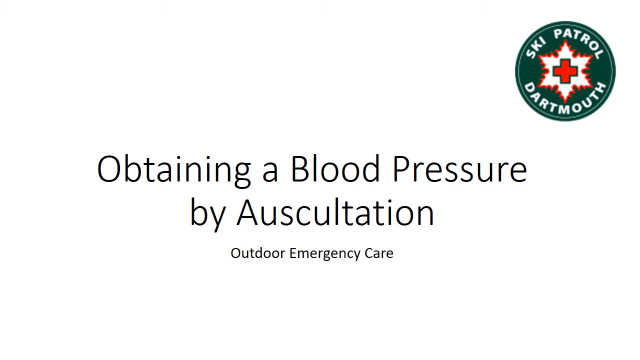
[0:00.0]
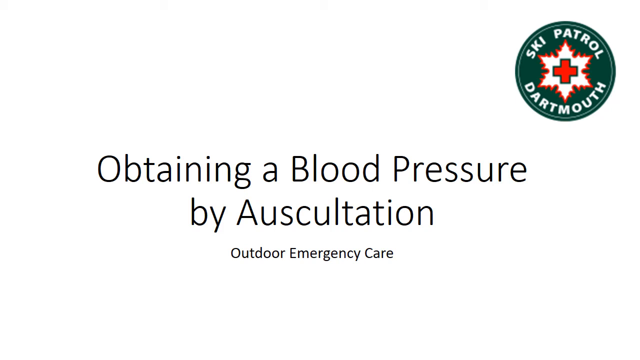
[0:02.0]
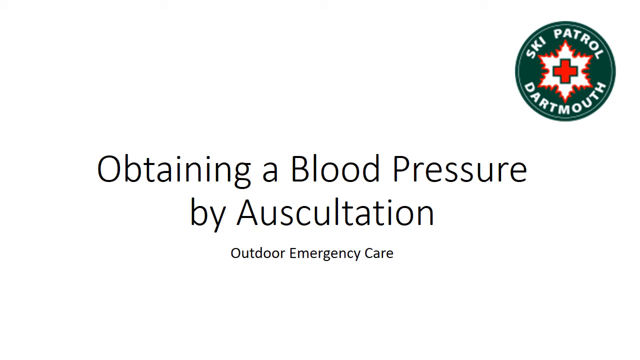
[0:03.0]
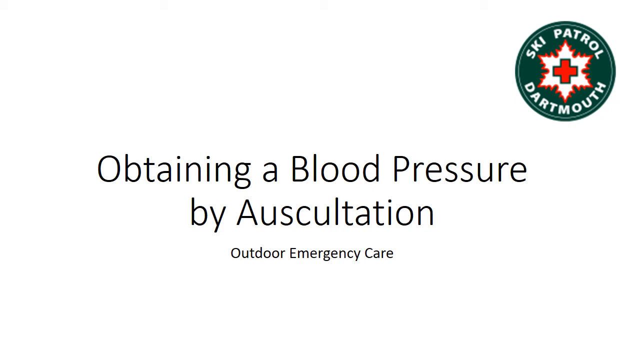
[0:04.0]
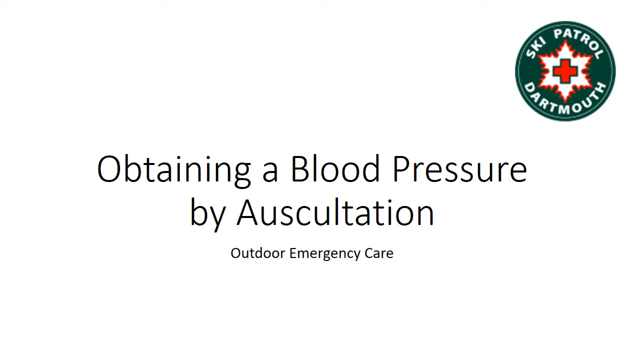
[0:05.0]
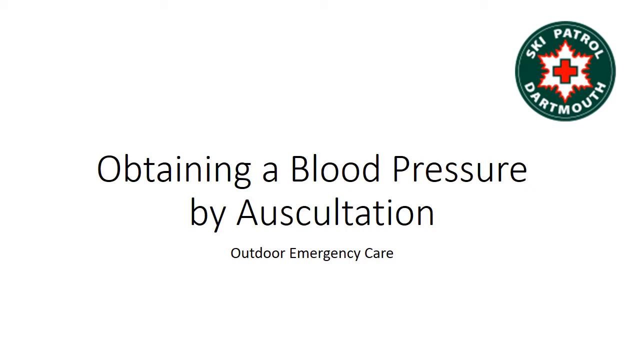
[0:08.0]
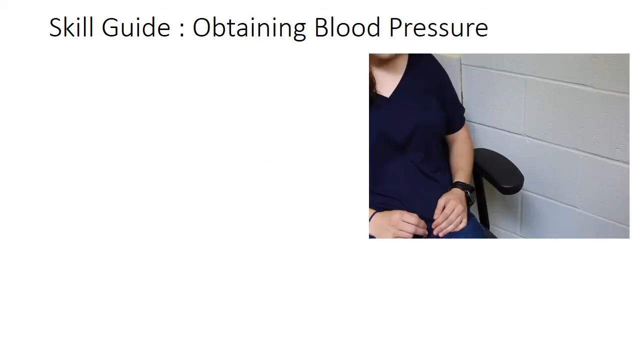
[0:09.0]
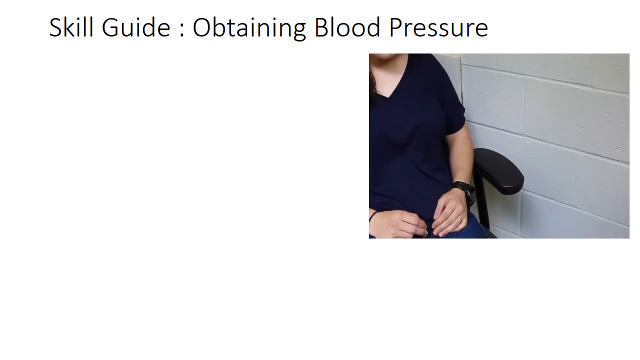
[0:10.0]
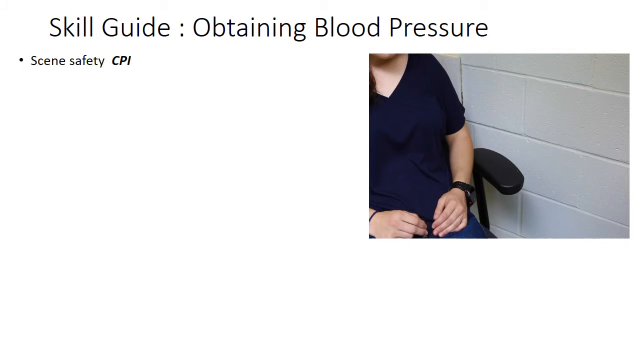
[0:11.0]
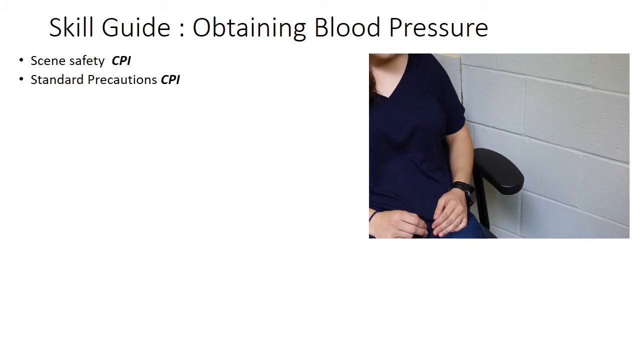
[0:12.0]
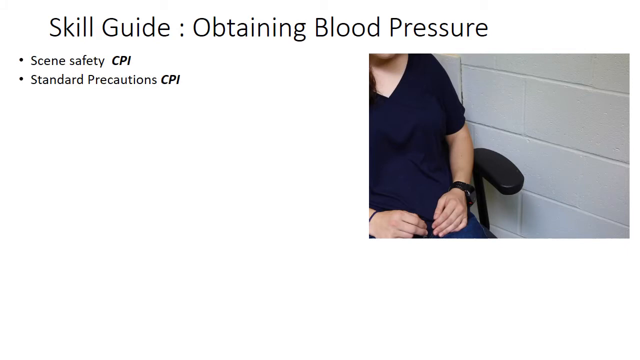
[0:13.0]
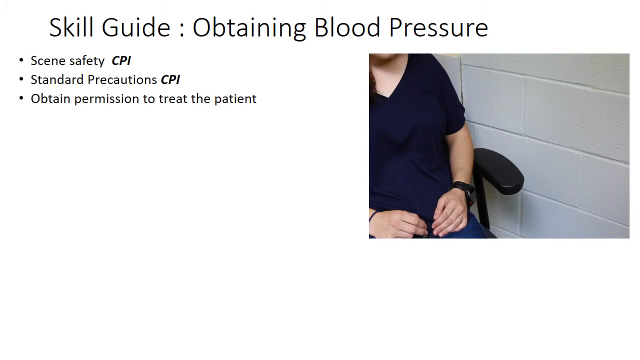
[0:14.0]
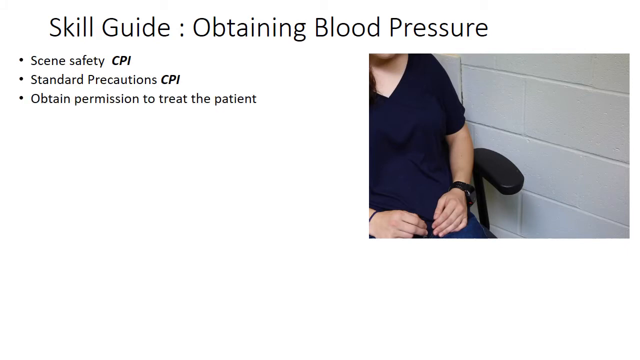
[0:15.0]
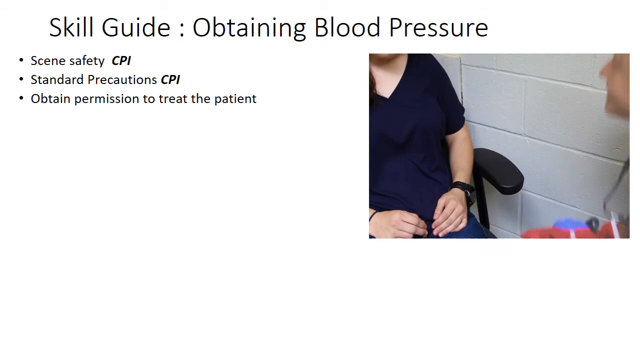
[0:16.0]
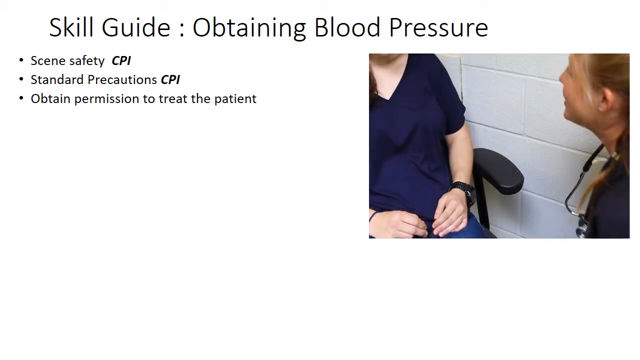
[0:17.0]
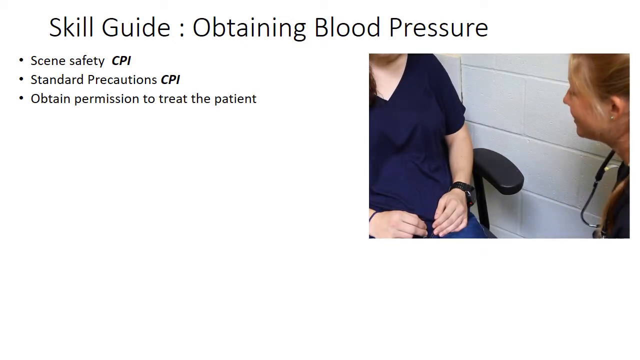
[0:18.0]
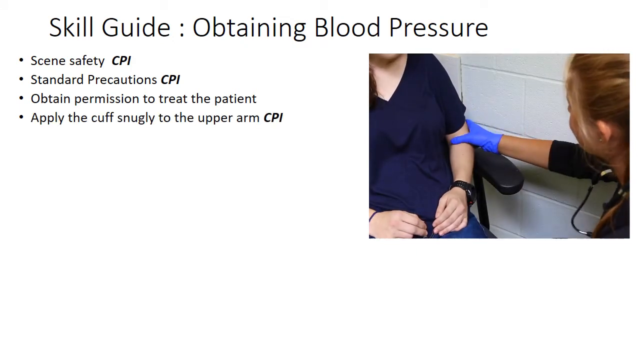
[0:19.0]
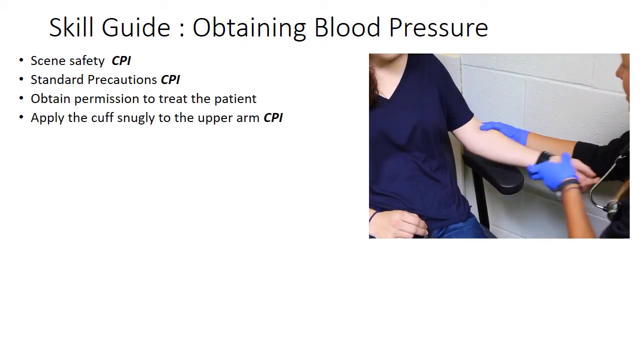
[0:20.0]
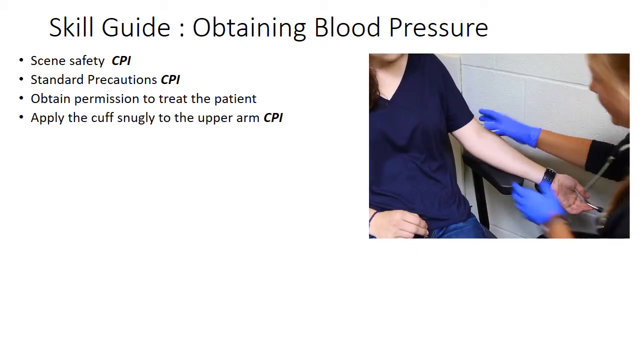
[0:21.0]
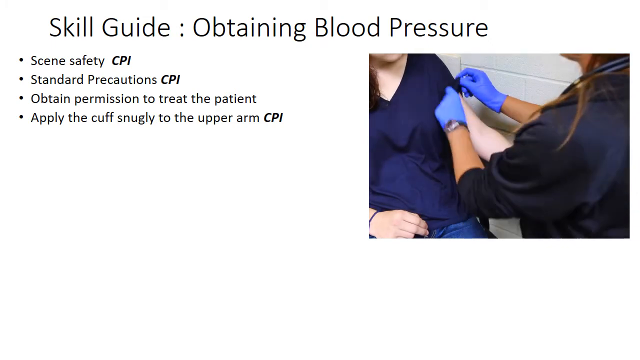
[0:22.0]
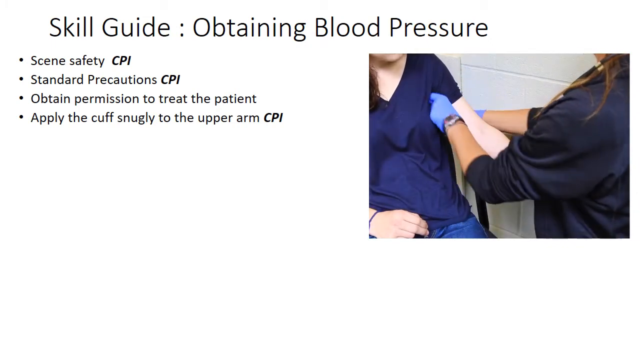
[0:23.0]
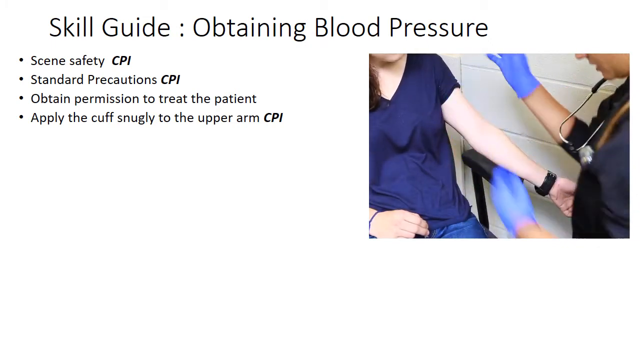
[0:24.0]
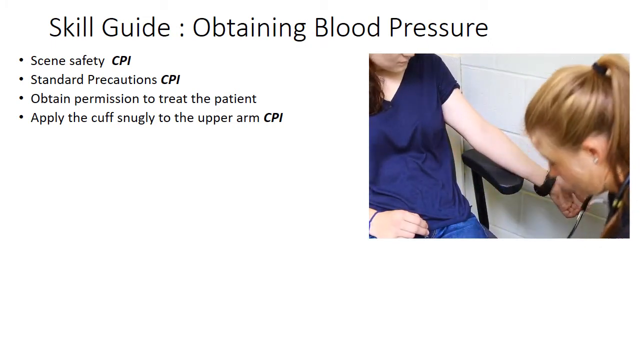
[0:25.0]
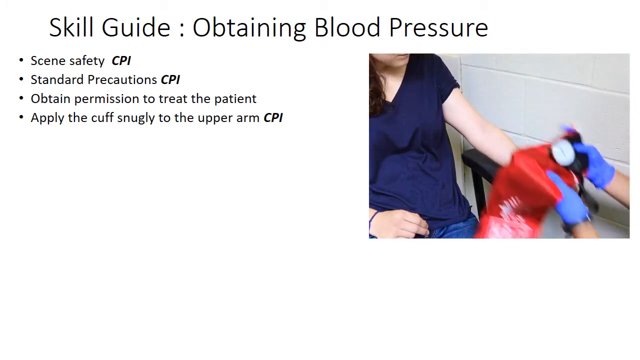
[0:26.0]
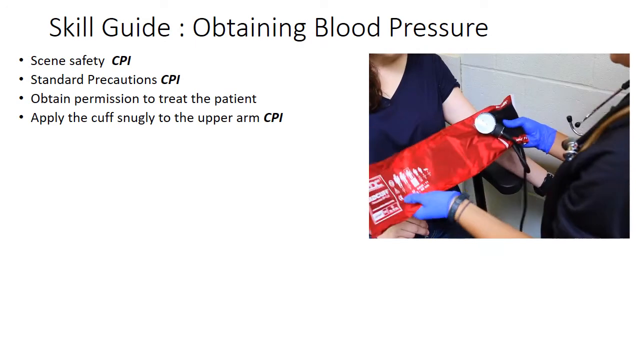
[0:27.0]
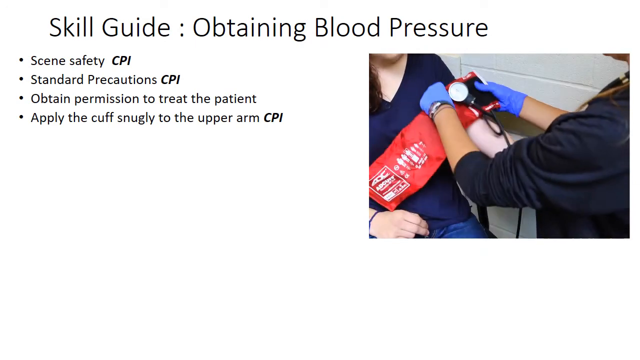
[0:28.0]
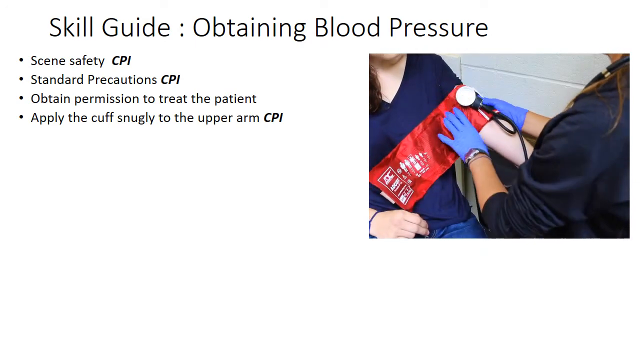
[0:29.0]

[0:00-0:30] The video opens with a title page reading "Obtaining a blood pressure by auscultation outdoor emergency care." In the top right corner of the page is "Ski Patrol Dartmouth" with a red cross and a white snowflake around the red cross. The next page reads "skill guide, obtaining blood pressure," with the bullet points "scene safety, CPI" and "standard precautions, CPI." In the top right corner of the screen is a picture of a person seated in a black chair, wearing a black V-neck t-shirt, black pants and a black watch, with a white concrete wall to the person's left. The bullet points continue with "obtain permission to treat the patient." Someone enters and kneels down to talk to the person in the black V-neck shirt; she is a woman with sandy brown hair and a stethoscope around her neck. She reaches out with both hands, gloved in blue plastic latex gloves, takes the seated person's left arm and holds it by the elbow and wrist. She relaxes the arm against the arm of the chair, rolls up the person's t-shirt sleeve and attaches a red blood pressure cuff to the left arm.